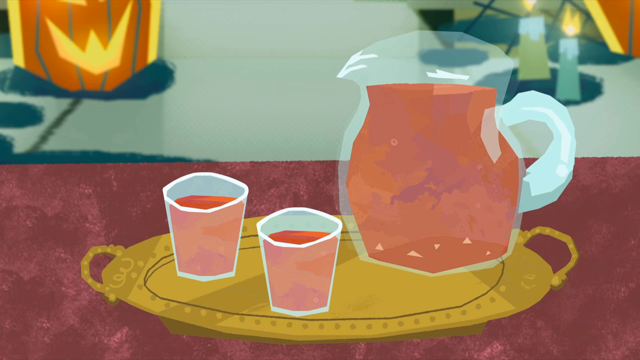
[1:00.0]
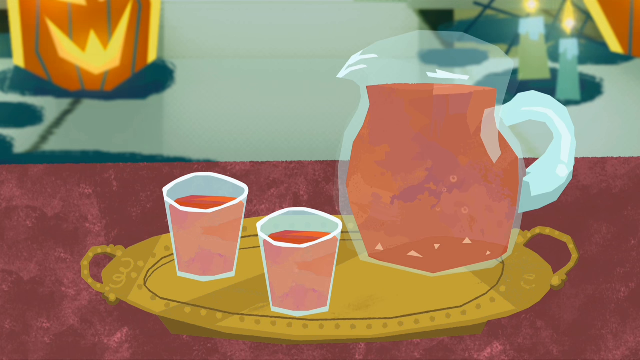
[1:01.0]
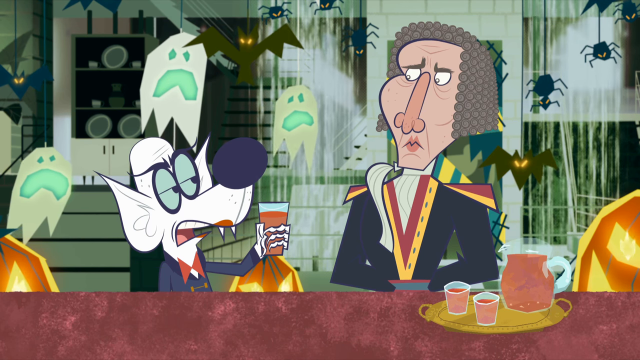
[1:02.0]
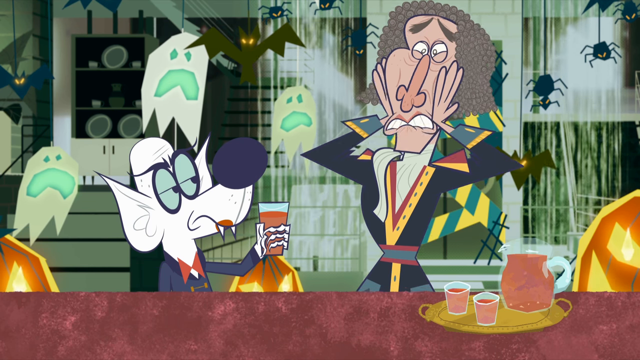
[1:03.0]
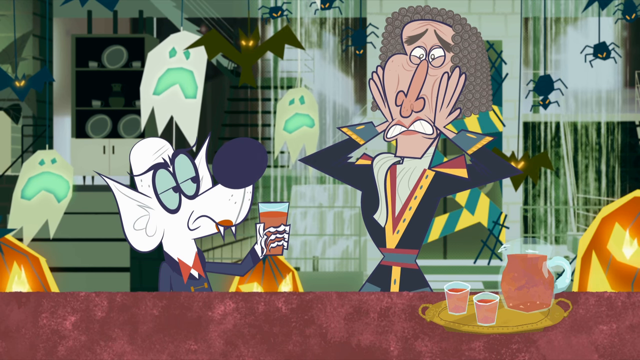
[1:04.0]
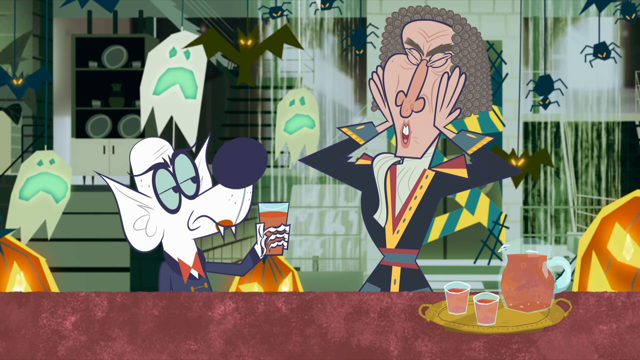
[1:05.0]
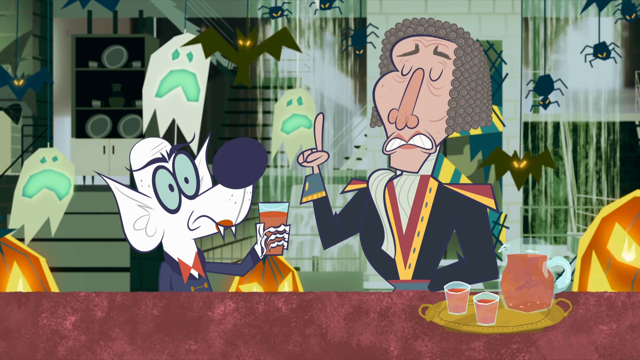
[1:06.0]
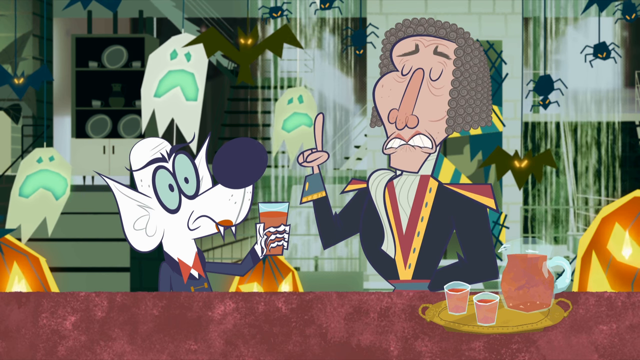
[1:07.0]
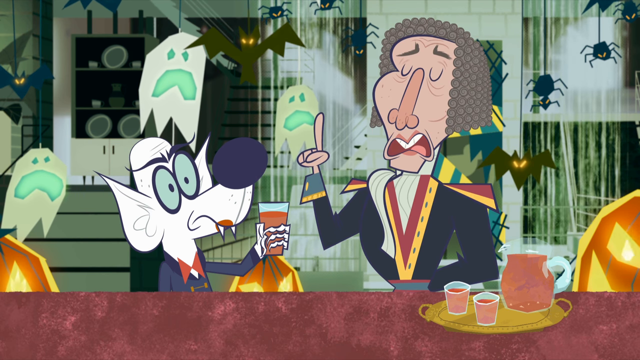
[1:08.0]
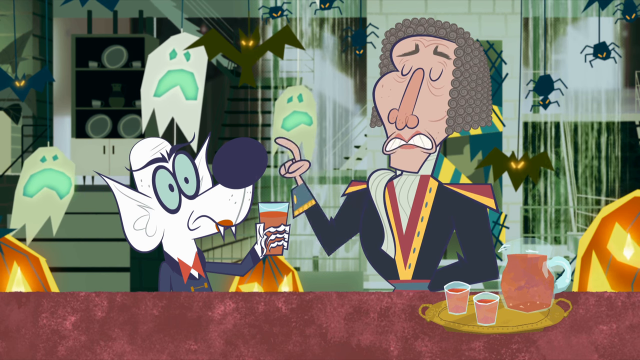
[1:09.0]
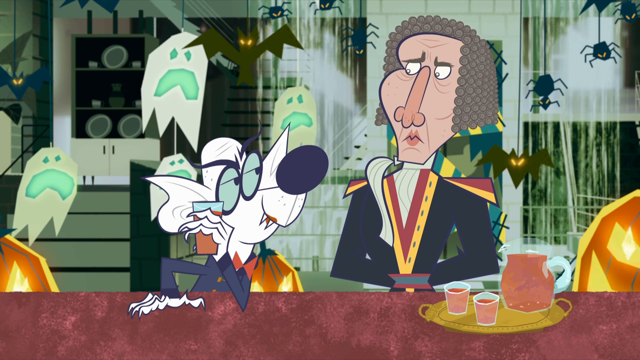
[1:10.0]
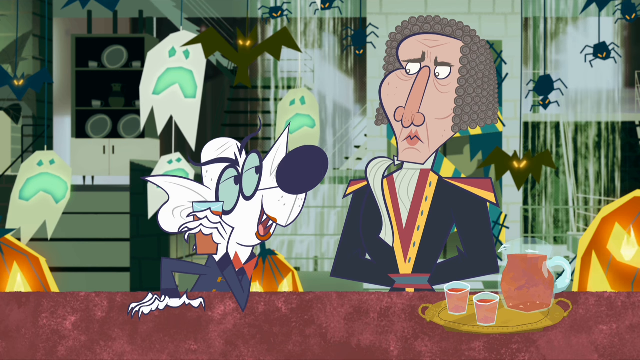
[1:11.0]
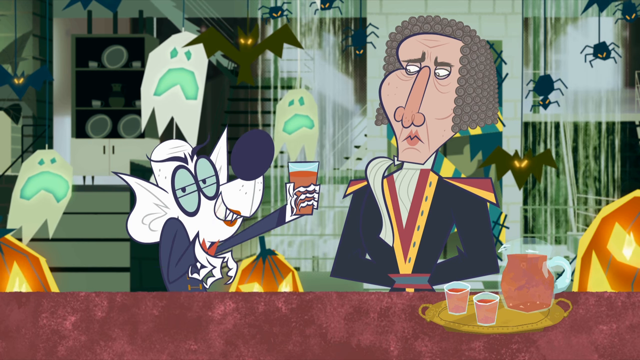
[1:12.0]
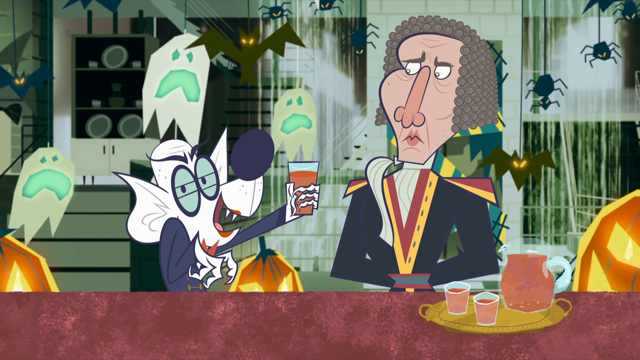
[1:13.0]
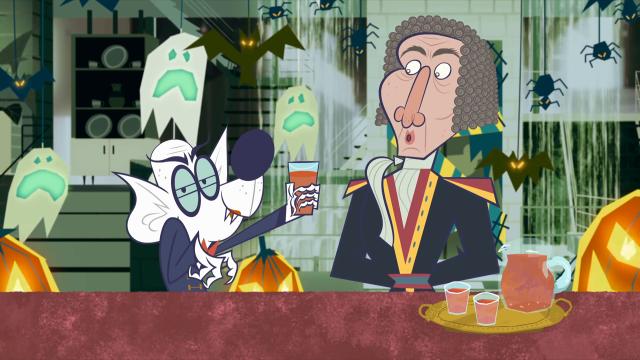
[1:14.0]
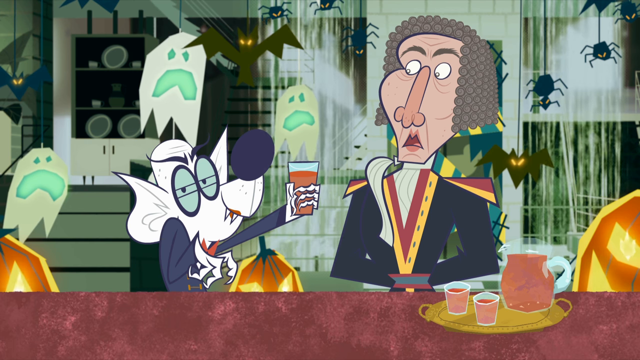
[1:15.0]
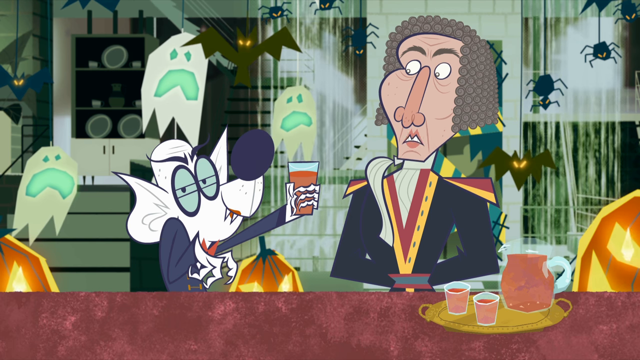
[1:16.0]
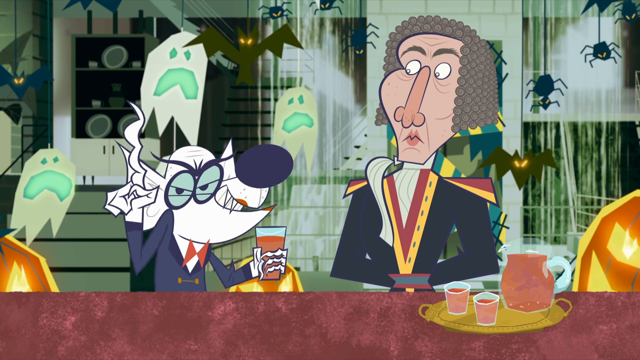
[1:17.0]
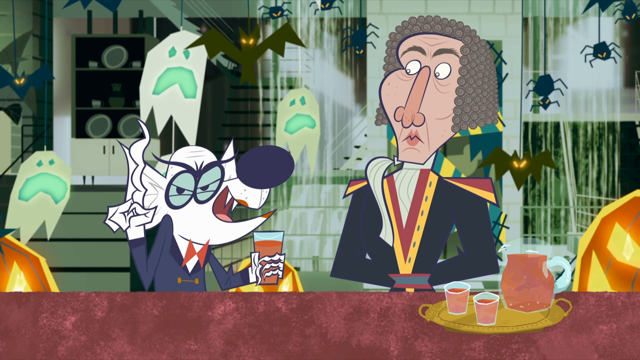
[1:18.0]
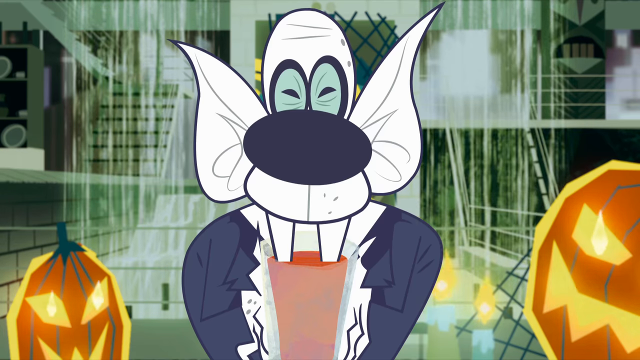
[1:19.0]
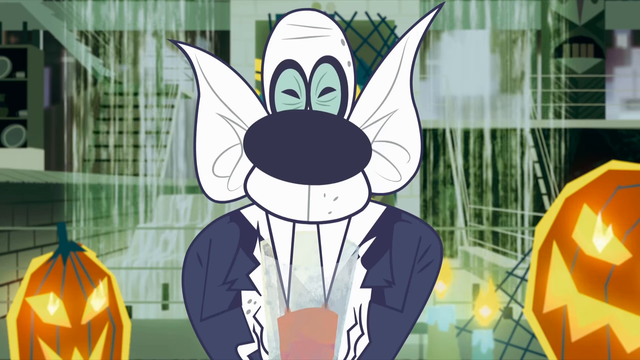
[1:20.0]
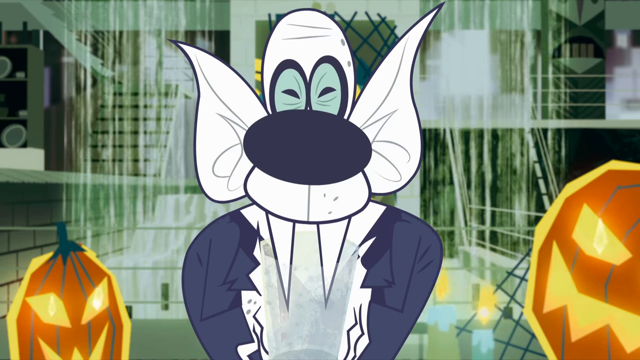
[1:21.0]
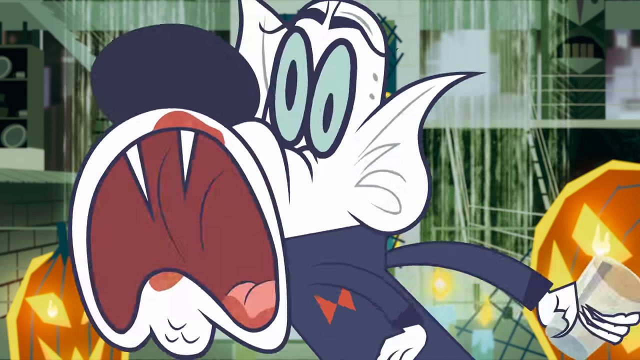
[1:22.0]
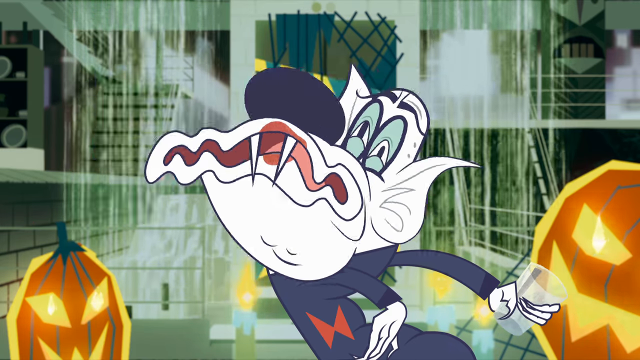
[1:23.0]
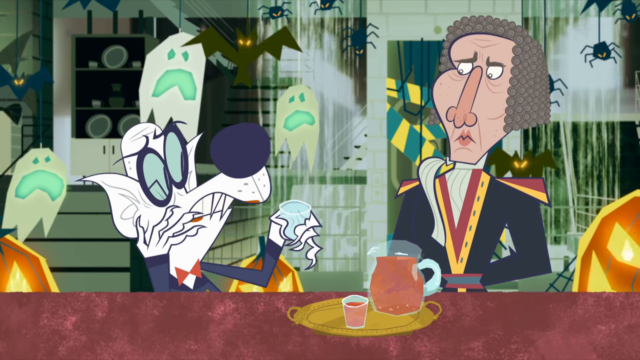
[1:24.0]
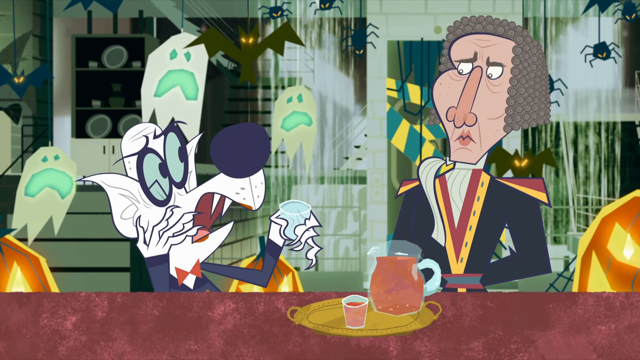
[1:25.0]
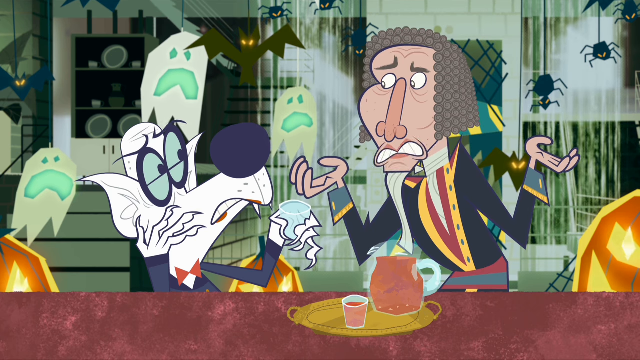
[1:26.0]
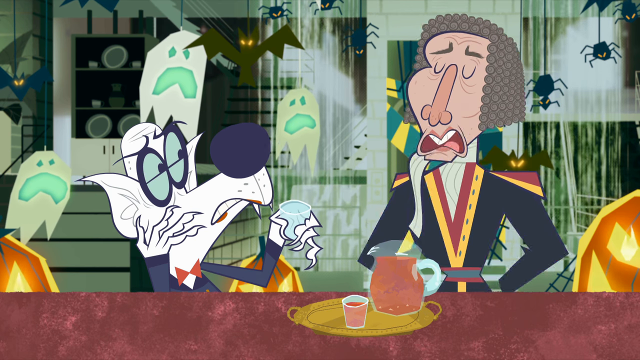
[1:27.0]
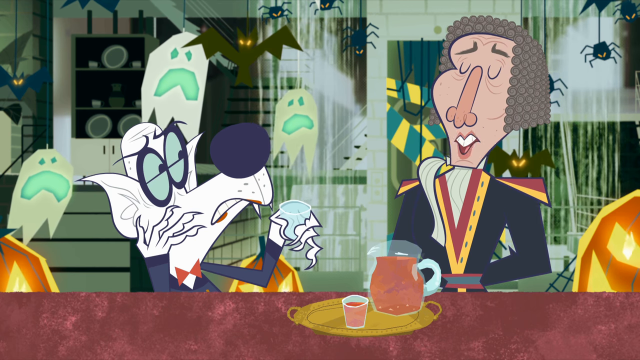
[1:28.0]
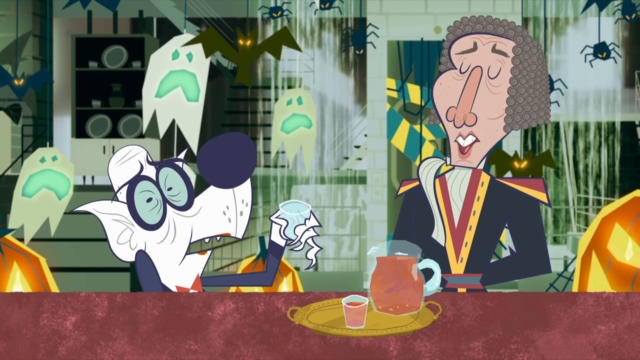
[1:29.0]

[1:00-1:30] The shot focuses on the jug of drink in the center of the screen, possibly blood or tomato sauce, hard to tell exactly. It bubbles, so it may be some sort of carbonated drink. The vampire dog appears to be holding the drink and seems wary or concerned as he faces the vampire in the center, the one who came down on the spaceship. The dog briefly points to the left of the sky and seems excited or curious about trying the drink. Very expressive, the dog tries the red drink, and vampire fangs are visible, so it almost seems to be some sort of blood. Judging by his facial expressions he does not seem to enjoy it: he starts essentially spitting it out or coughing, with an angry or upset face, and he talks to the vampire from space with a negative, frowning, upset expression.